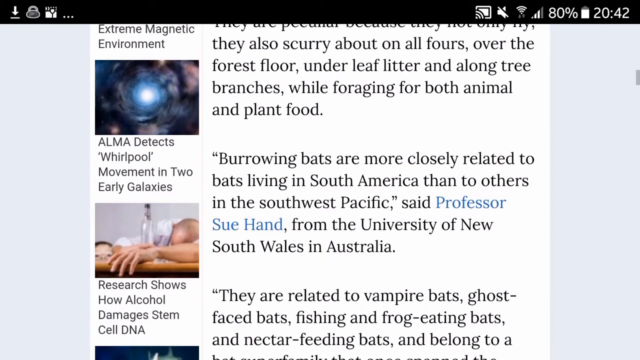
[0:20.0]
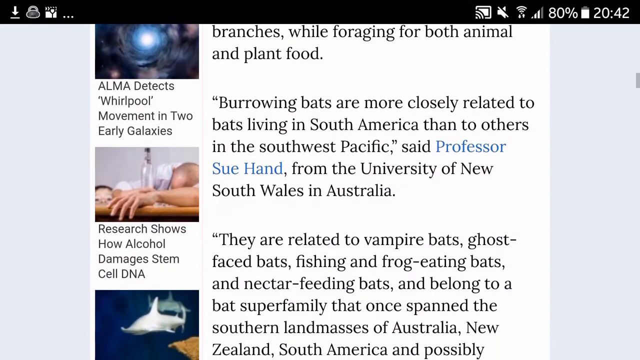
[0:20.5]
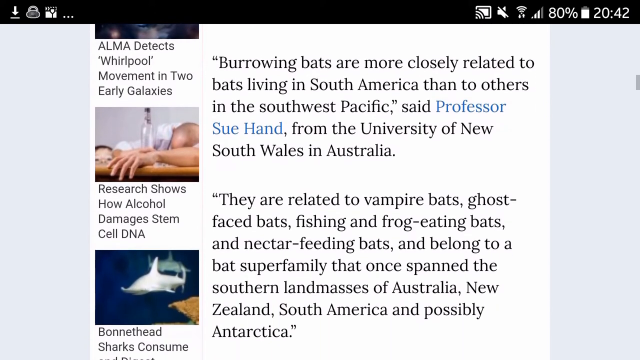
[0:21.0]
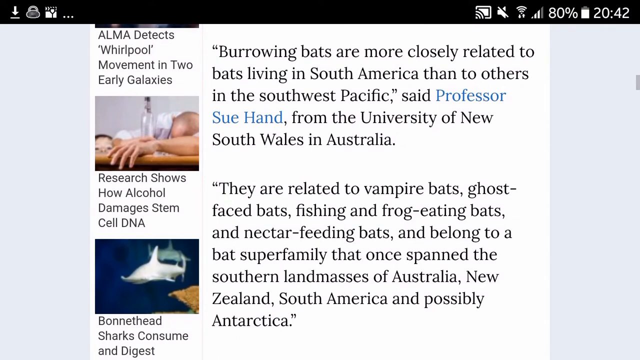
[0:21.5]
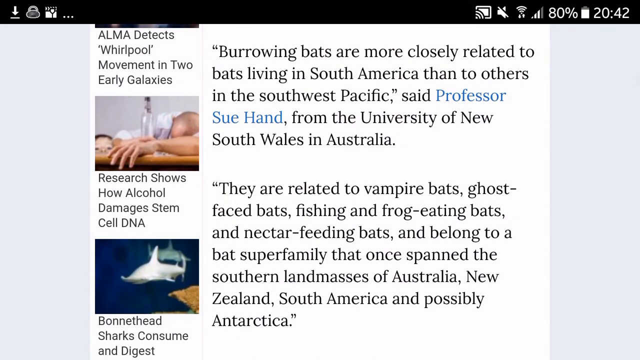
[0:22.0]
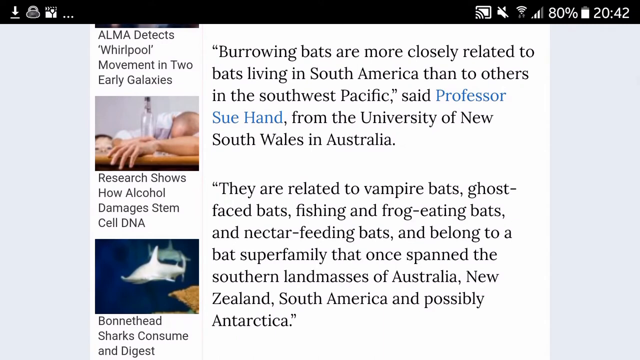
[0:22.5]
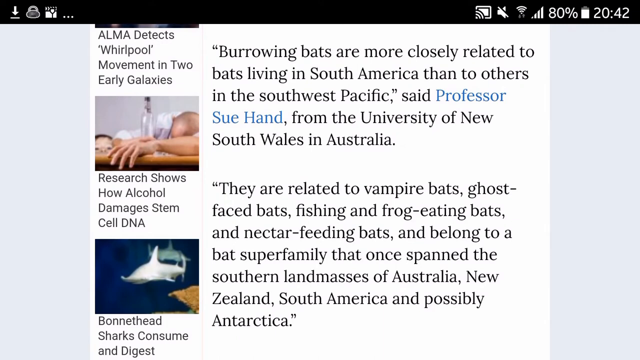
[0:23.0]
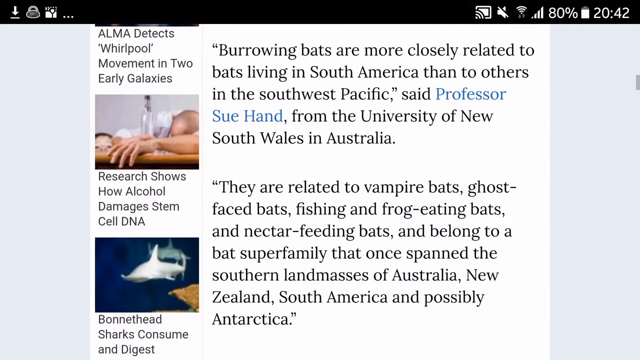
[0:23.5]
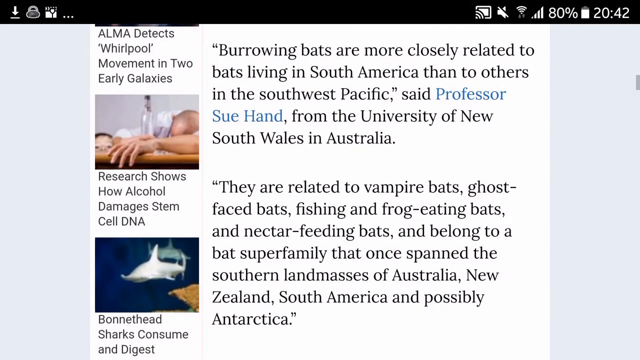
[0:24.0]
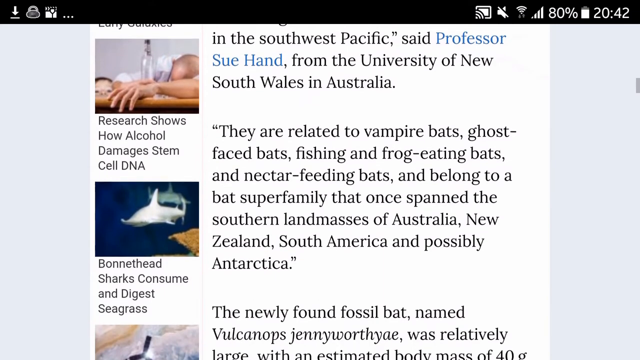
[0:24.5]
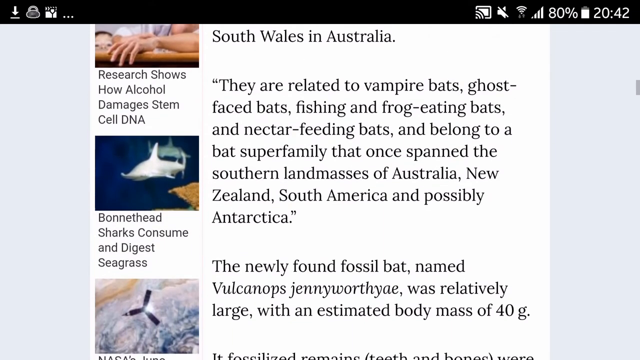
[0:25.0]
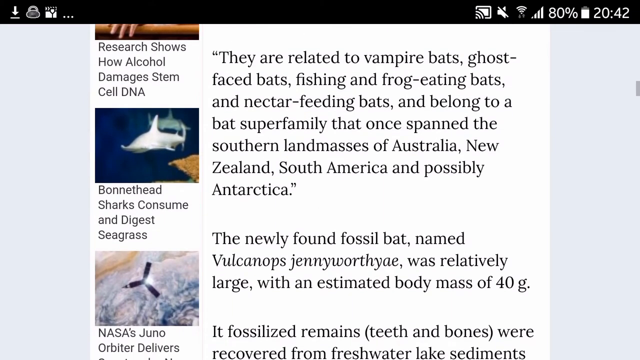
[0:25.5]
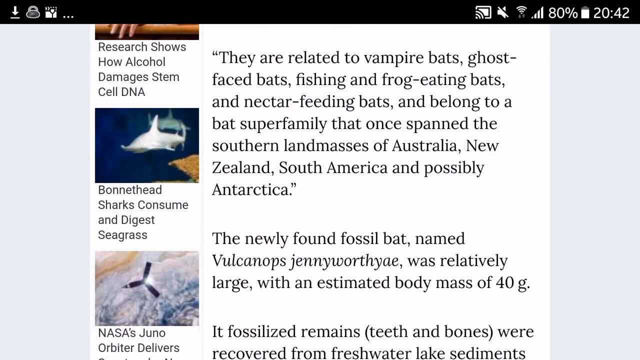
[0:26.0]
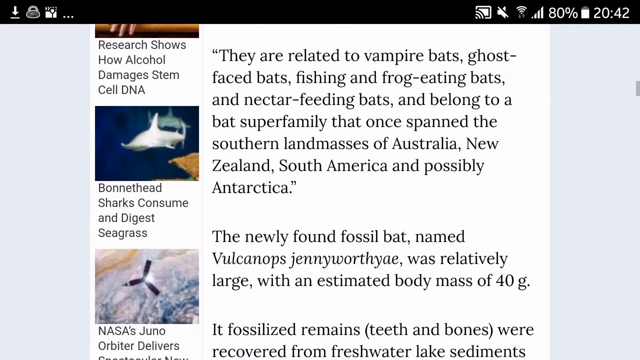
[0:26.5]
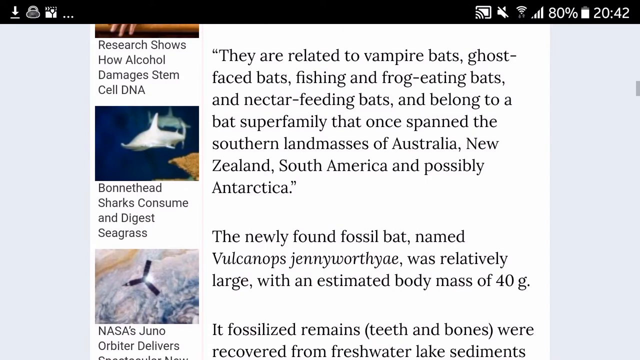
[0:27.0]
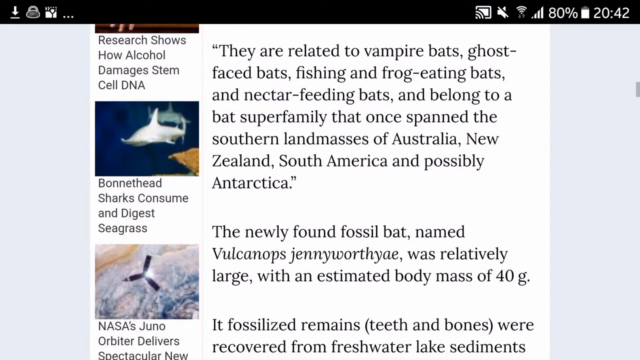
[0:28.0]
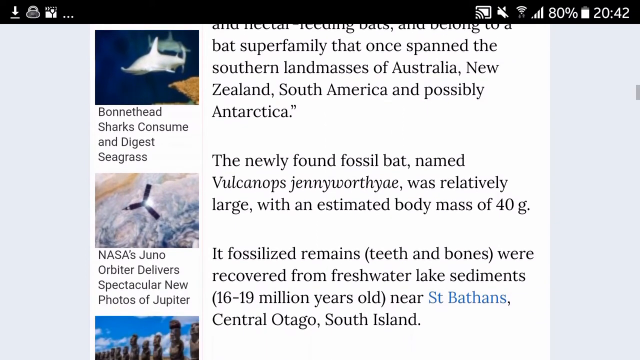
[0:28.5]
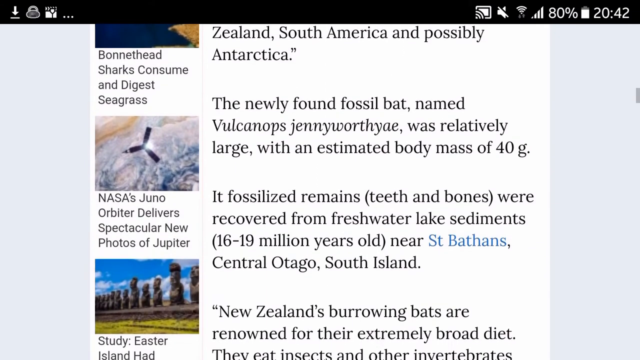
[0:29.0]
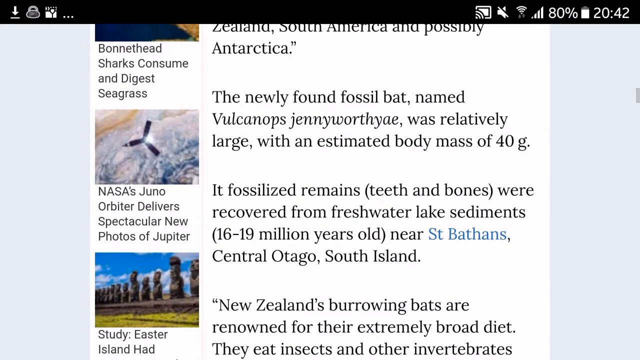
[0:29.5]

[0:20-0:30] The page continues to scroll down through more information about the burrowing bats living in South America. The article is credited to Professor Sue Han from the University of New South Wales in Australia. The text states that the bats are related to vampire bats, ghost face bats, fishing and frog eating bats, and nectar feeding bats, and belong to a bat super family that once spanned the southern land masses of Australia, New Zealand, South America, and possibly Antarctica. Scrolling further, the text says the newly found fossil bat was relatively large, with an estimated body mass of 40 grams.